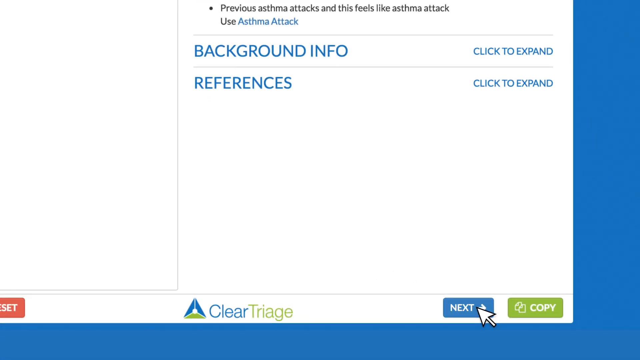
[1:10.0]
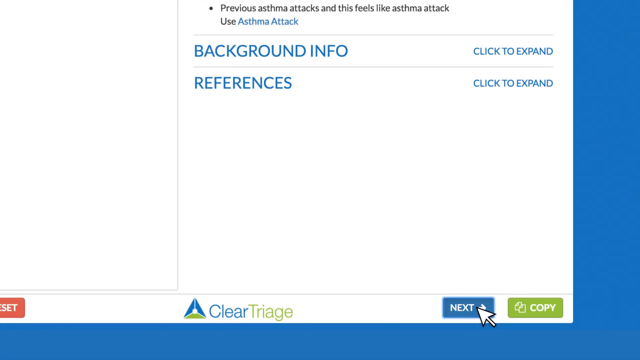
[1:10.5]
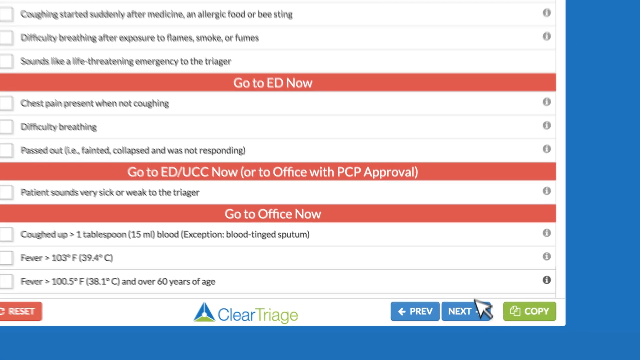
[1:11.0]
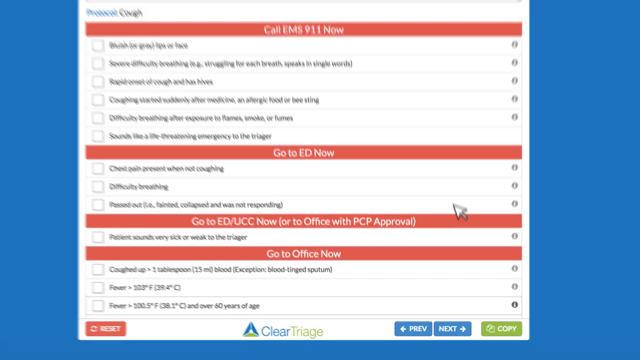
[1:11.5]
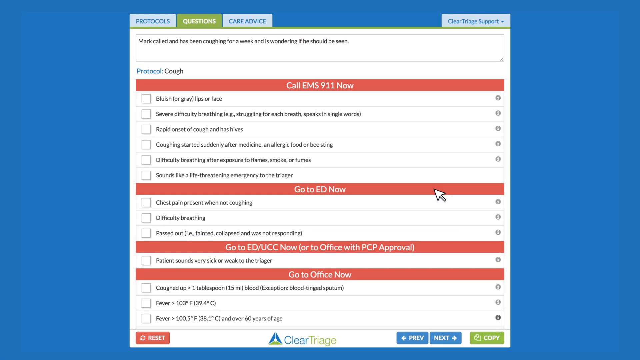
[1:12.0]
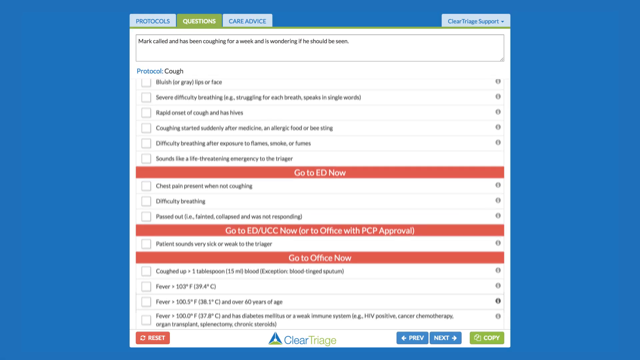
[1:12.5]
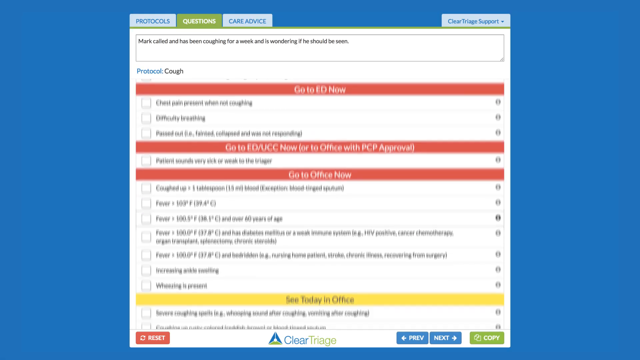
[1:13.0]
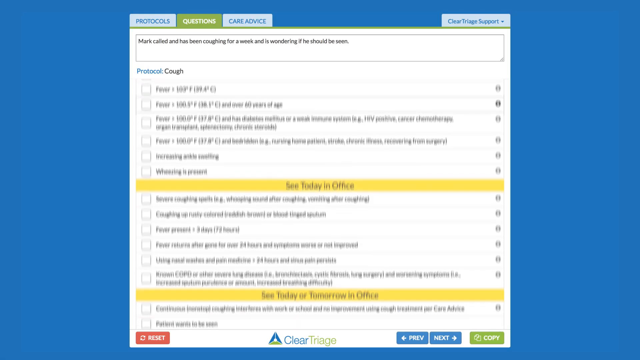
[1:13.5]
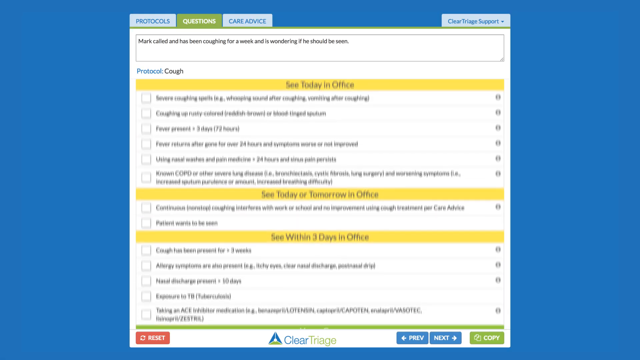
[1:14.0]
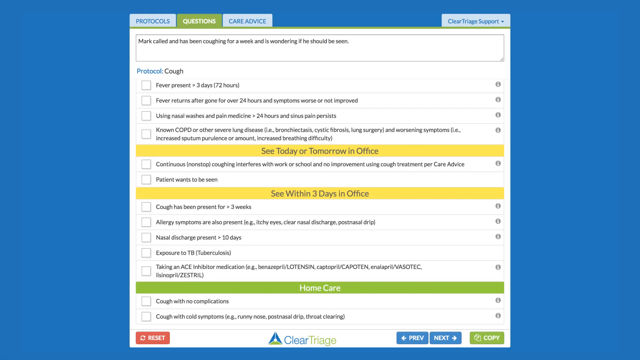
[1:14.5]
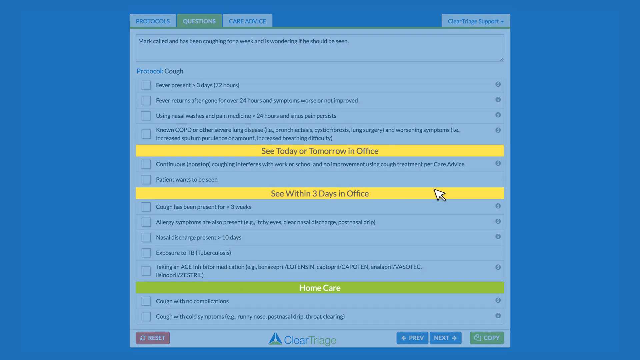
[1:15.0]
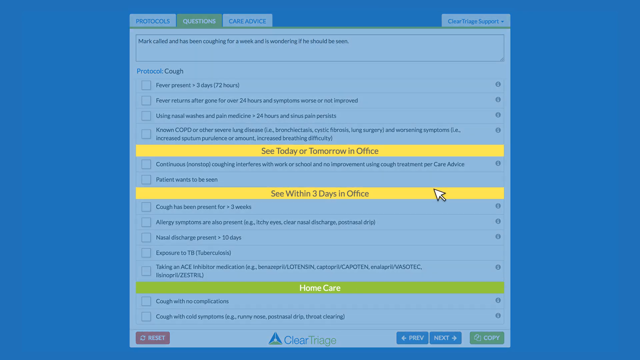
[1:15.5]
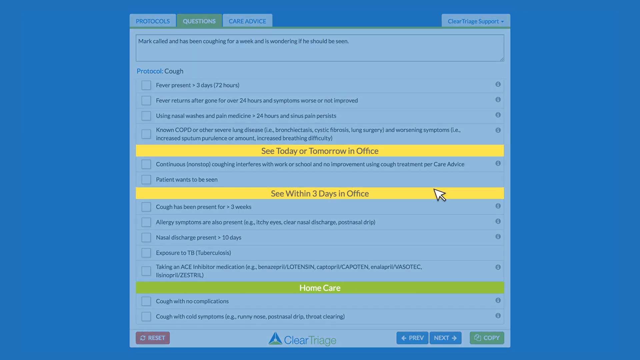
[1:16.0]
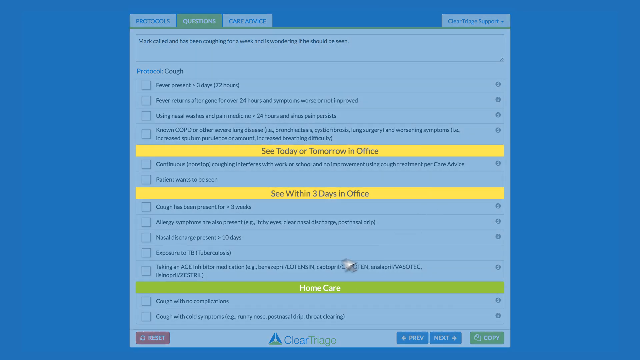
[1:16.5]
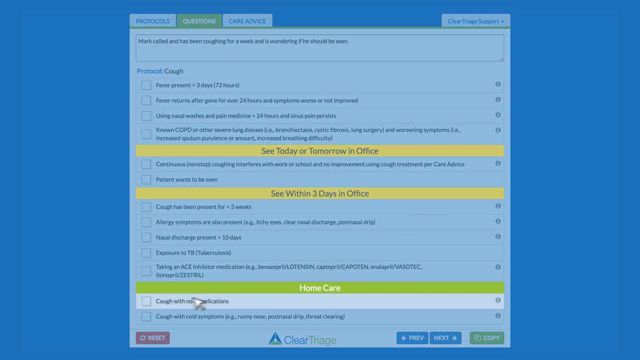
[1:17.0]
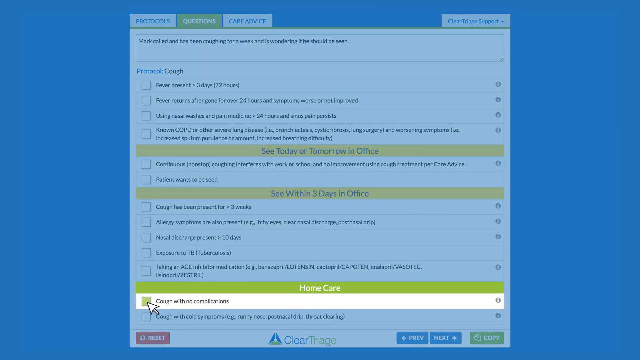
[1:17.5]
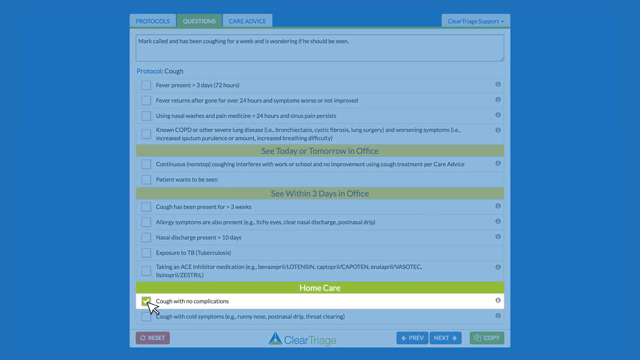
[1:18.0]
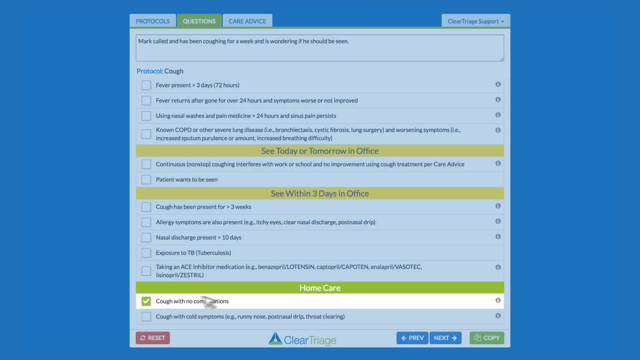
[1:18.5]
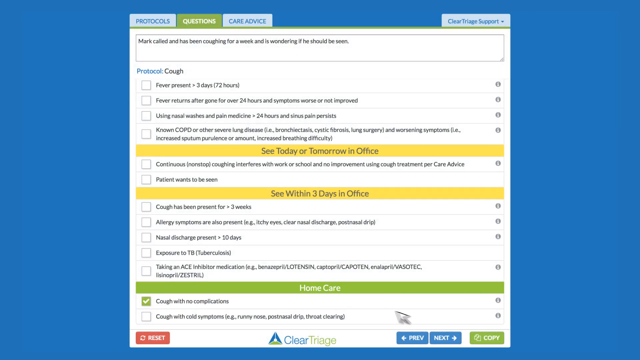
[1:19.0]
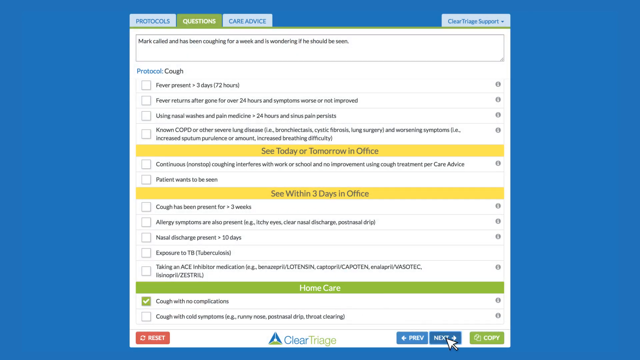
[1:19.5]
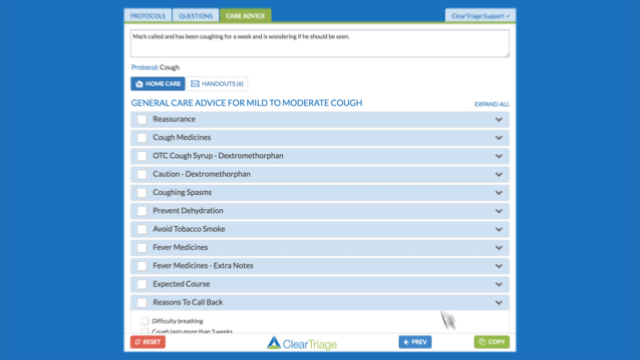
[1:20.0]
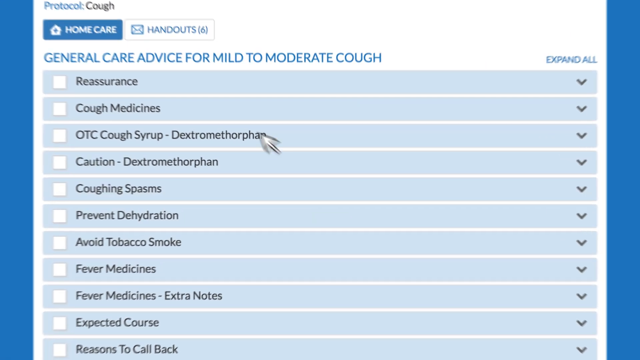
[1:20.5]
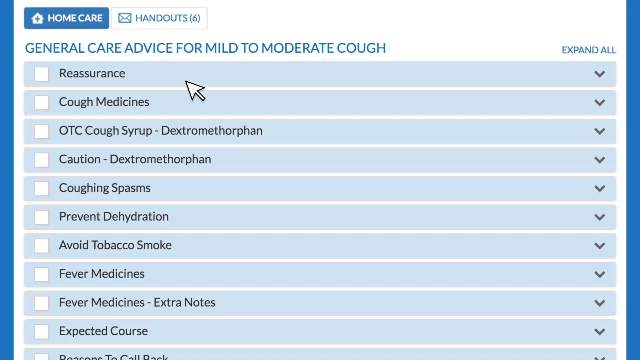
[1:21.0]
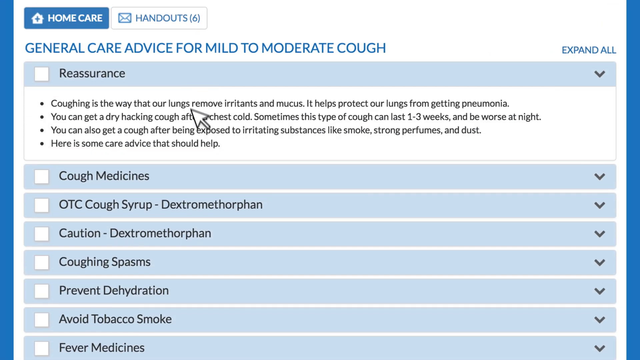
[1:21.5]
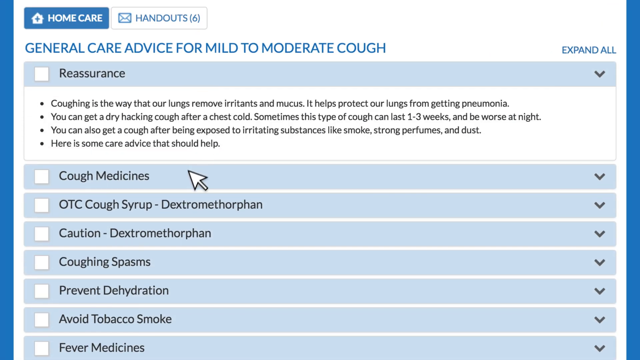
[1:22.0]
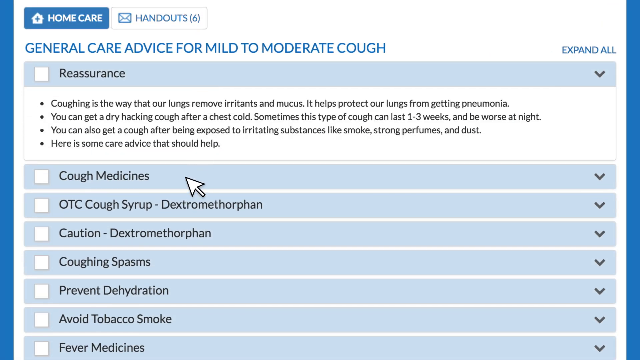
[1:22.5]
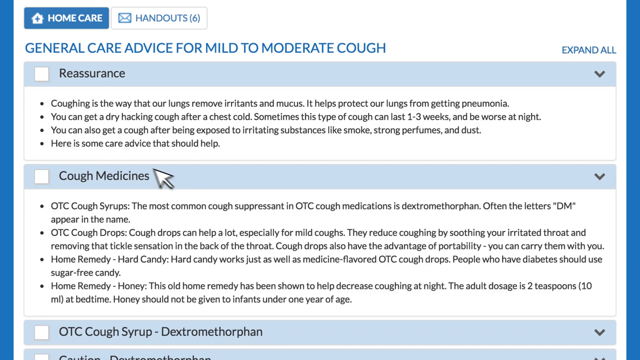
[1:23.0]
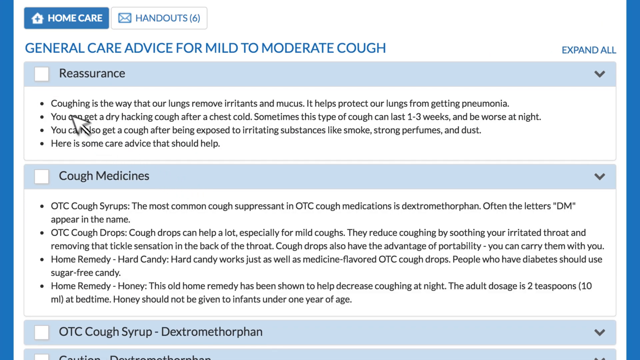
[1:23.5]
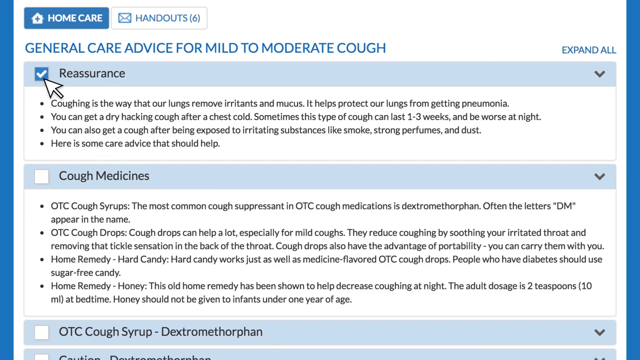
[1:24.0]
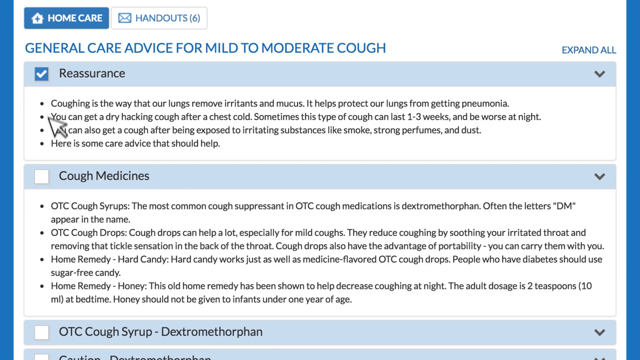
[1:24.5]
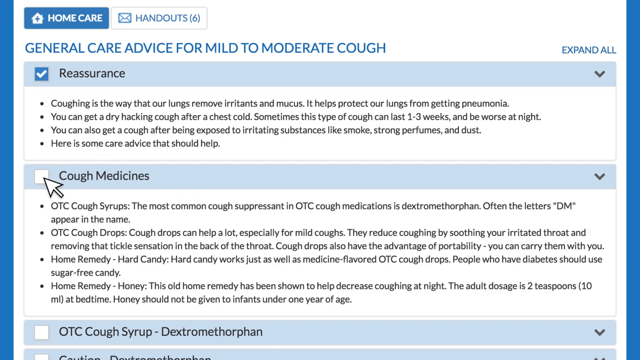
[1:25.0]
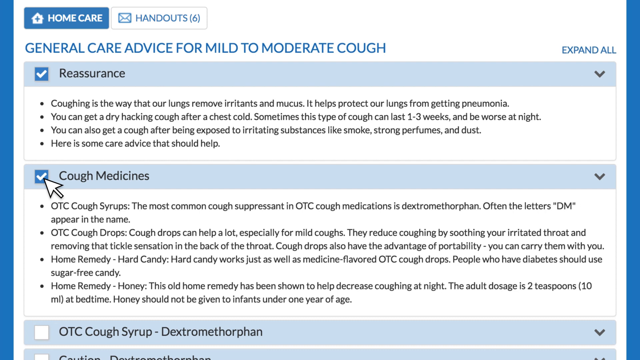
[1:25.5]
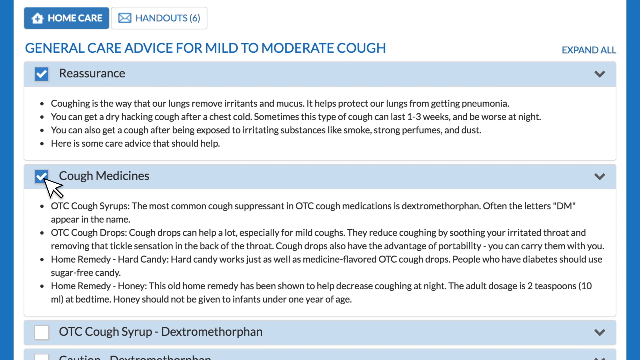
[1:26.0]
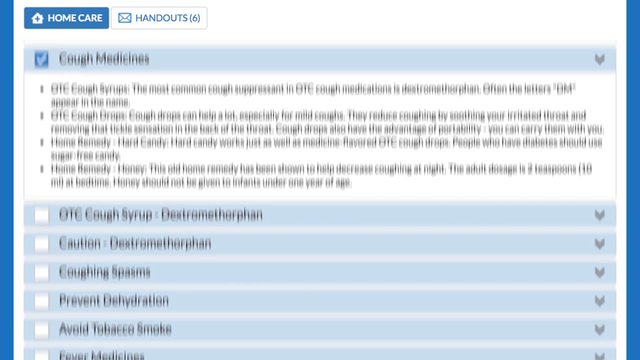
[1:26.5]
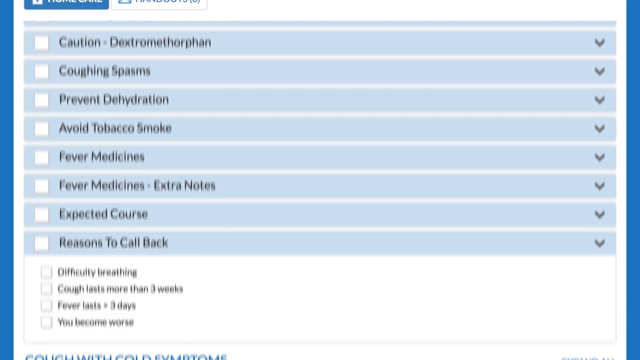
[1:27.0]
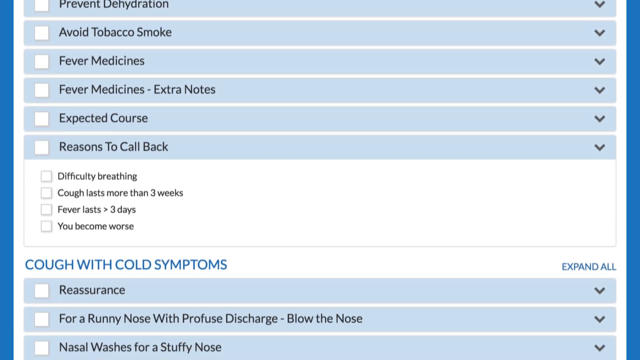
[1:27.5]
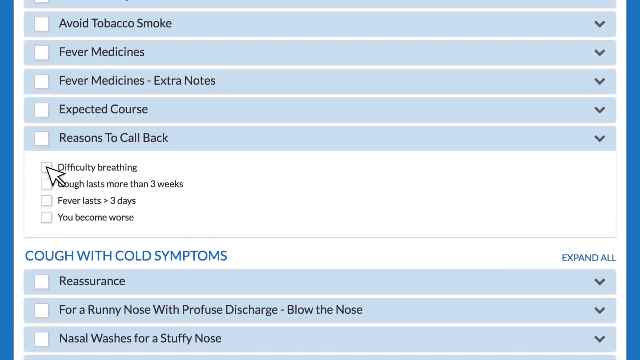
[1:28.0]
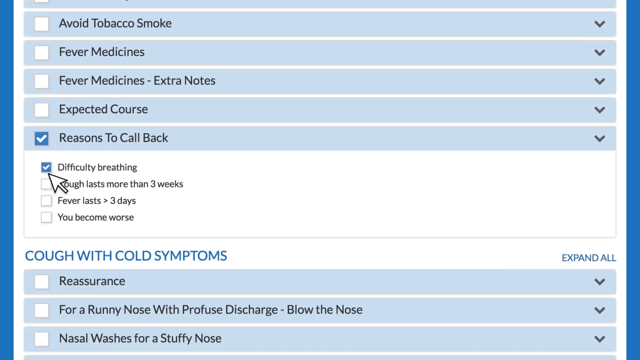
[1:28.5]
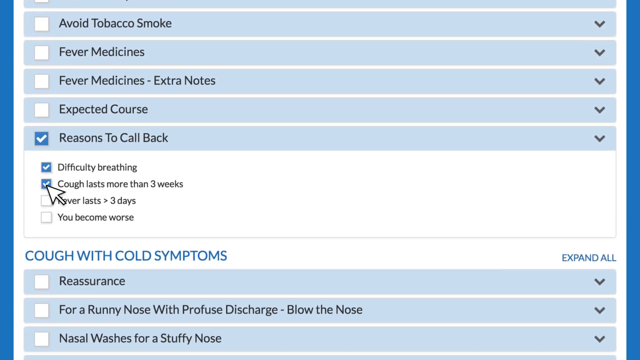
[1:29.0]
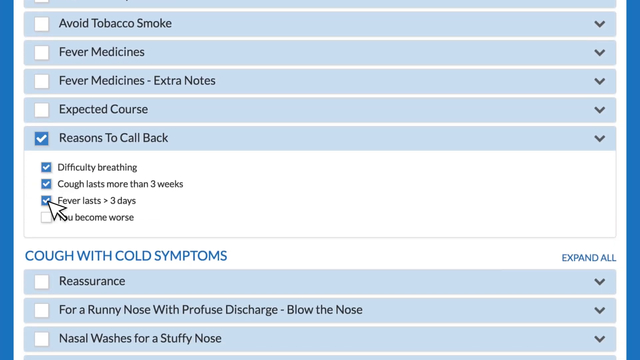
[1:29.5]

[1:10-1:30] What looks like a computer screen has a blue background with a white page on it. At the top of the page is a black dot, with "previous asthma attacks" to its right, and the words "asthma attack" appear in blue letters. Below that, in blue capital letters, it reads "BACKGROUND INFO", with "click to expand" to the right. Below that it says "references", also with "click to expand" to the right. At the bottom of the white area is a triangle whose left and right sides are blue and whose bottom is green, with "clear triage" to its right, "clear" in blue and "triage" in green. Further right is a blue "Next" button with the mouse cursor on it, and to its right a green "copy" button. The arrow clicks "Next", and another page with a lot of writing appears. It fades out, and three lines run across the screen from left to right, two yellow and one green. The top yellow line reads "see today or tomorrow in office", the second reads "see within three days in office", and the green bottom line reads "home care". The arrow clicks an item involving cough, and another page appears with tabs reading "reassurance" and "cough medications", which the arrow clicks. It then clicks "difficult breathing" and some other tabs that appear.